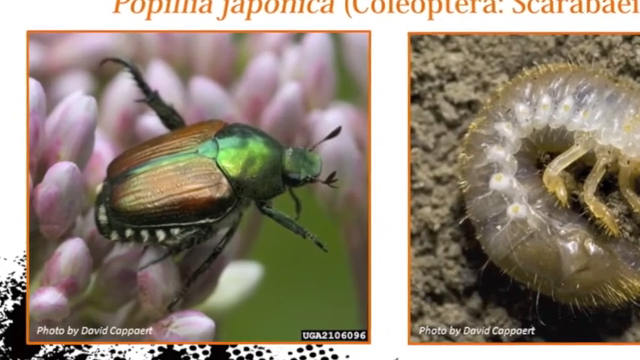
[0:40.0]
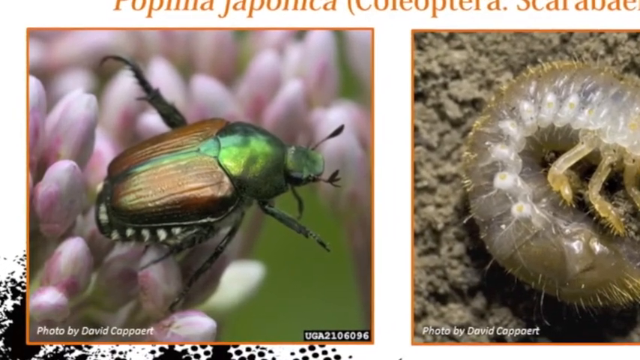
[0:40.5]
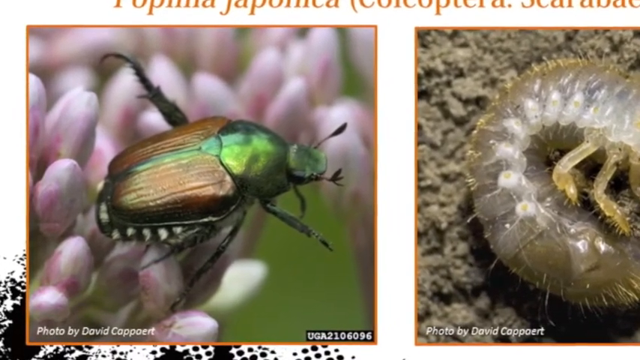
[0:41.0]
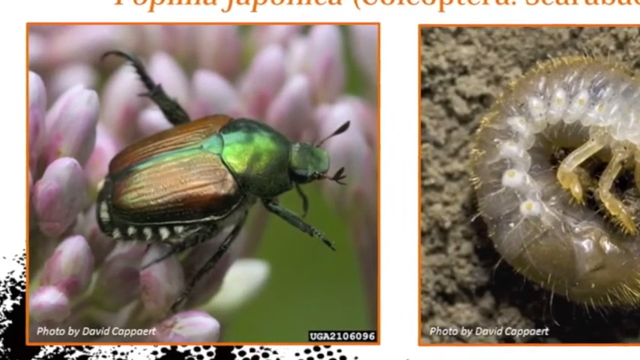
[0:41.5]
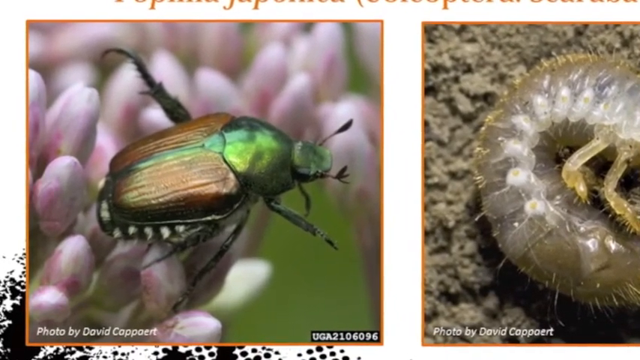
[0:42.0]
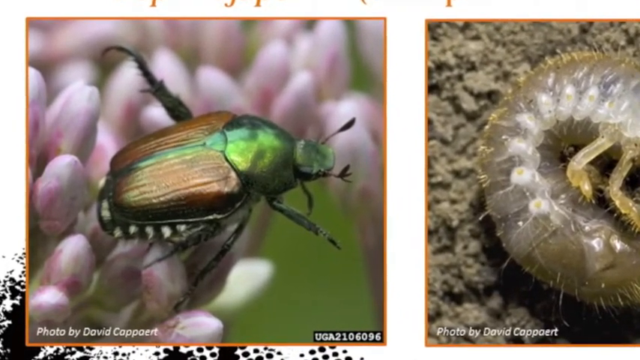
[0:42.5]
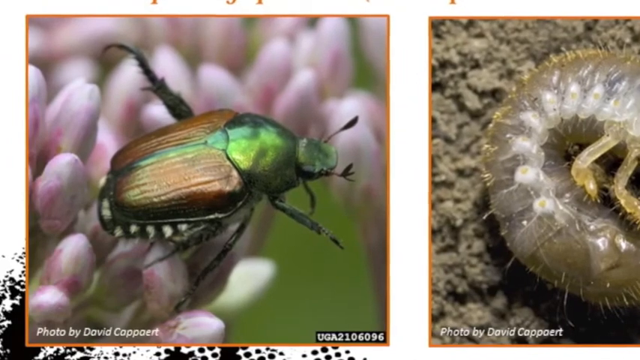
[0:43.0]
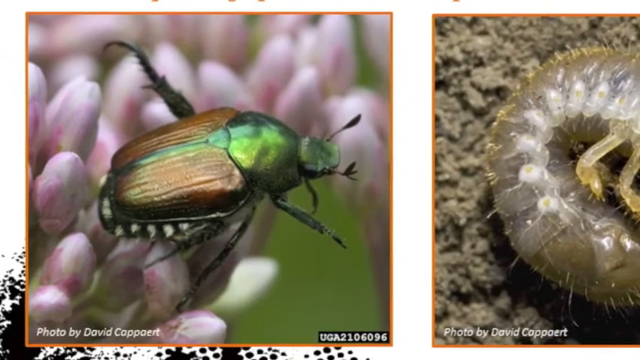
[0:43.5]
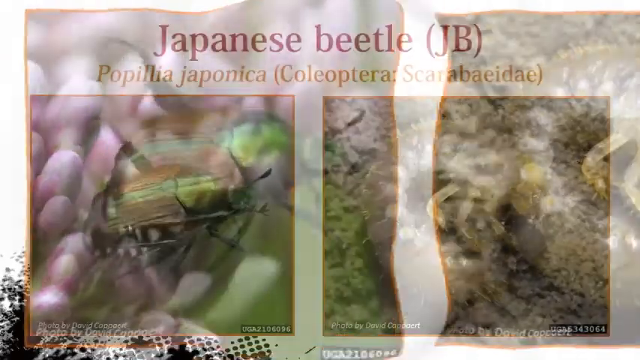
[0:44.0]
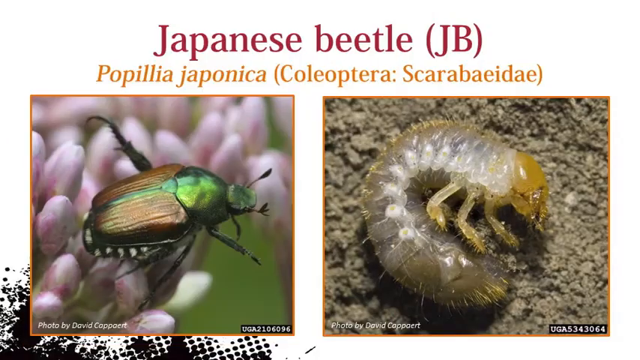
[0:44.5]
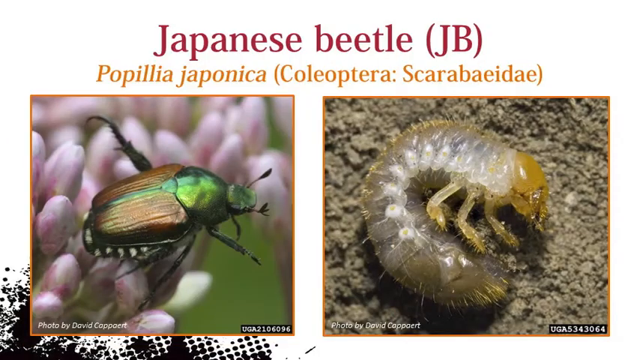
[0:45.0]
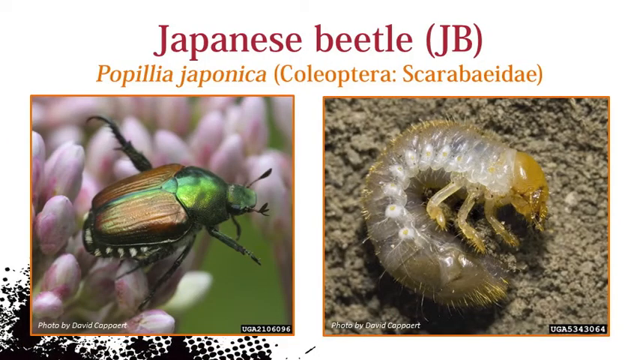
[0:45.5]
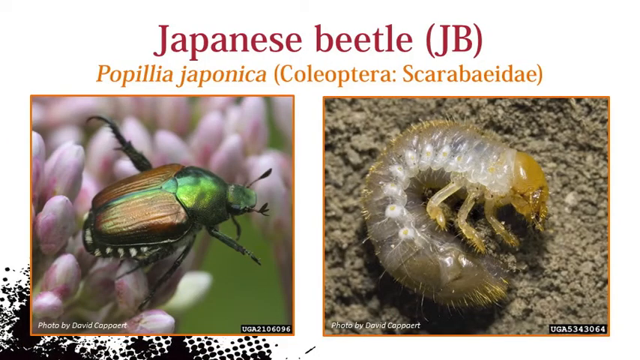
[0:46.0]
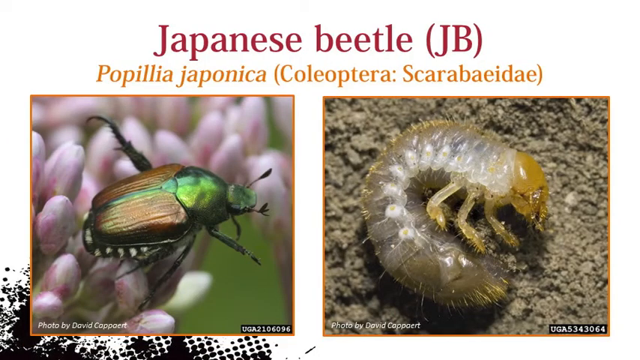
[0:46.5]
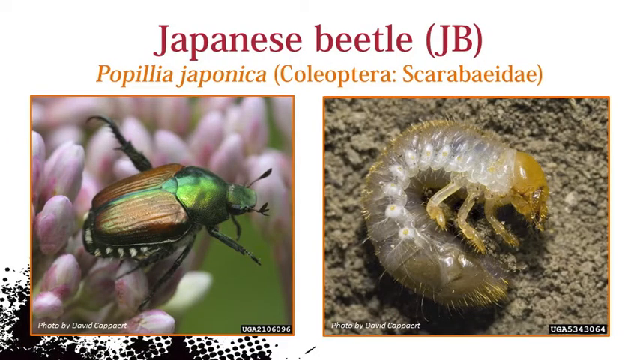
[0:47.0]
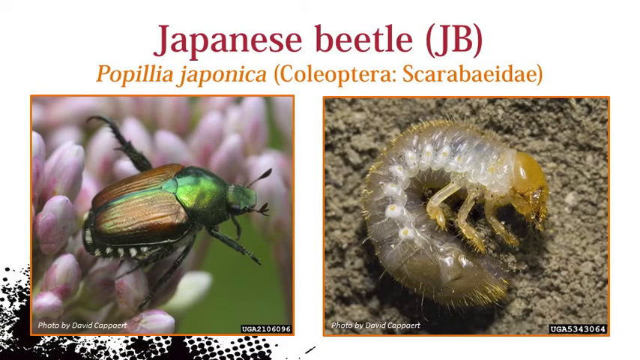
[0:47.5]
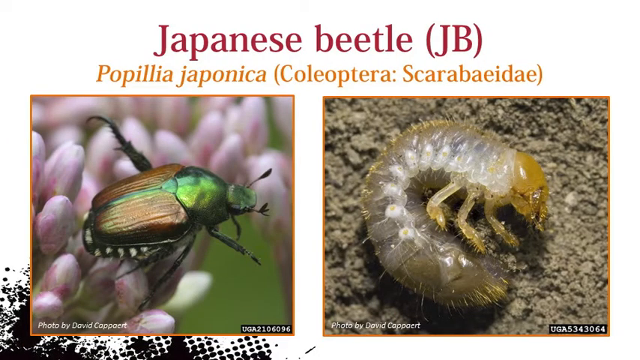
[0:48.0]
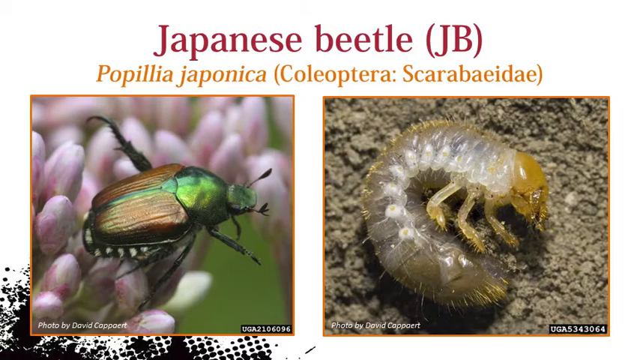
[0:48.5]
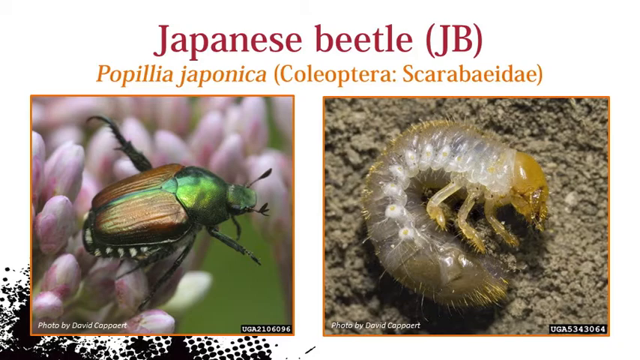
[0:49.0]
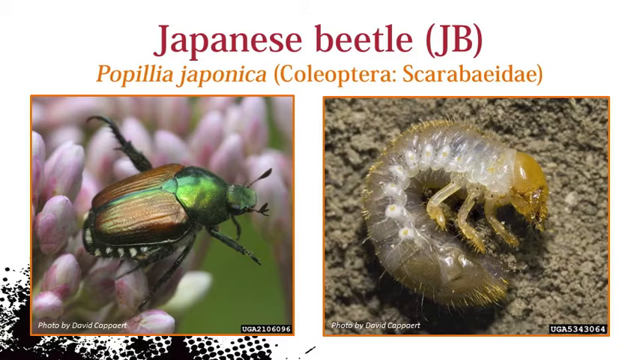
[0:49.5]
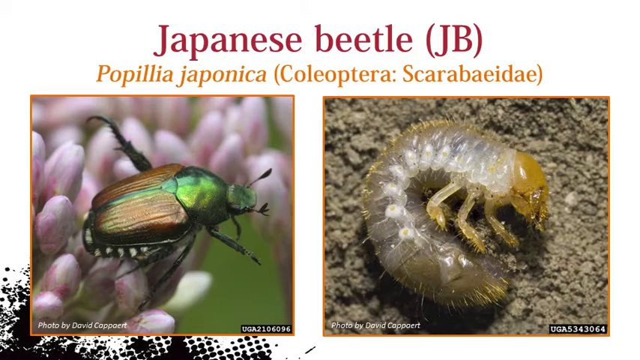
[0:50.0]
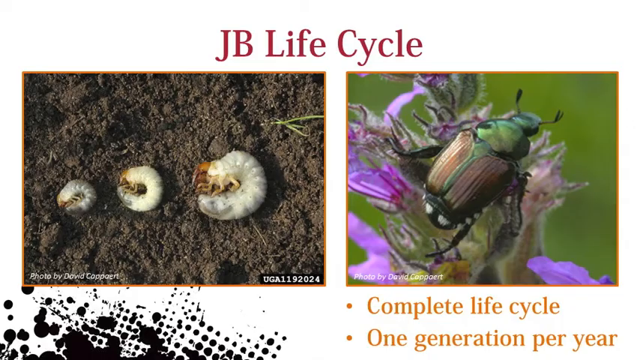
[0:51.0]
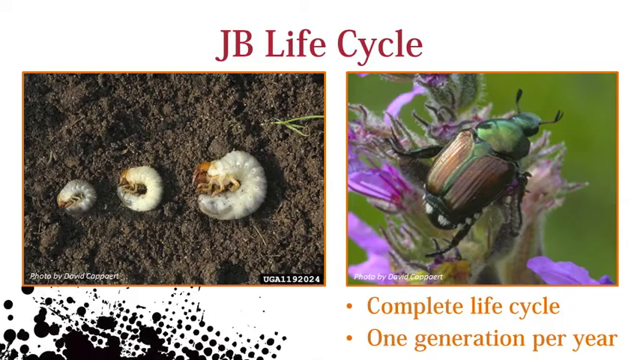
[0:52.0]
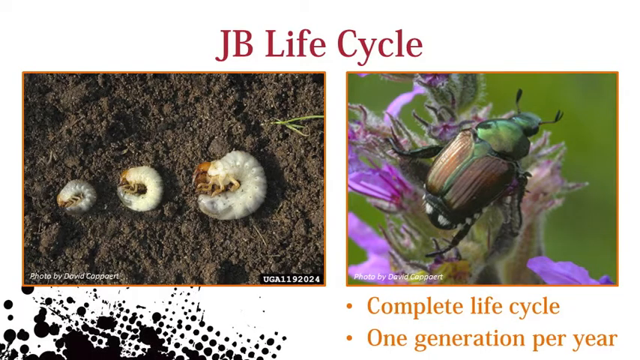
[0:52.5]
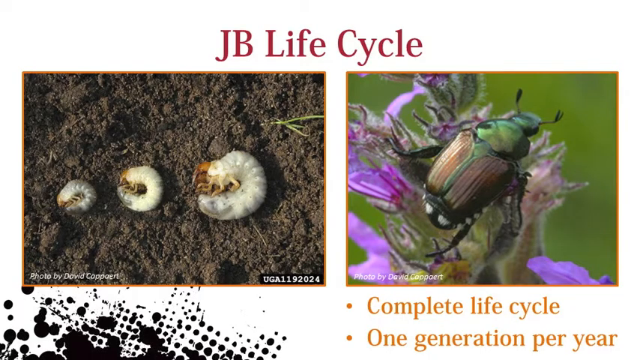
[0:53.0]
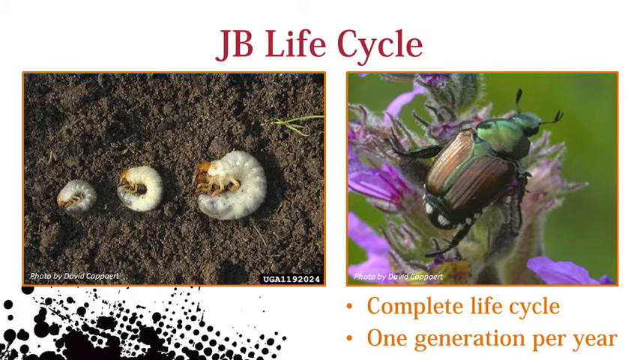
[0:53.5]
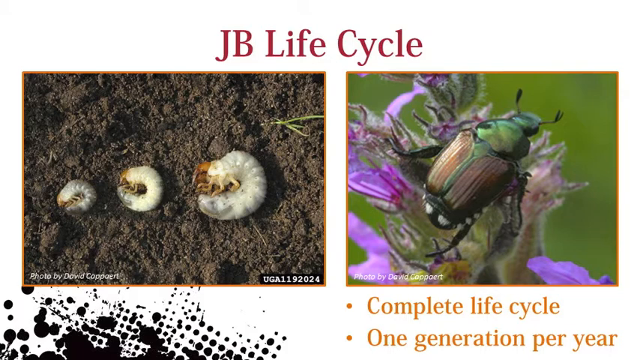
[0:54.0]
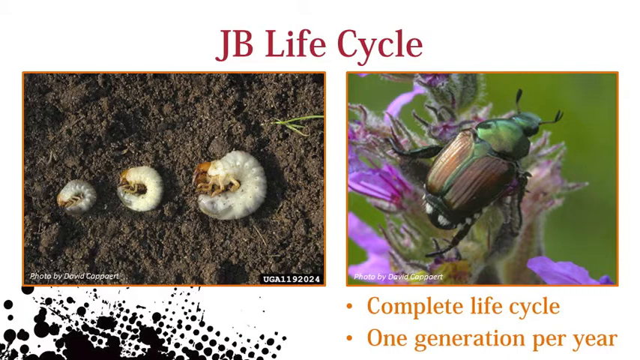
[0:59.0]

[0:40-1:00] The green beetle is shown in the main area of the screen on the left, on top of a leaf or some type of flower. On the right, the curled-up see-through beetle lies on the ground. Credits for who took the photos appear at the bottom left of the images. The video cuts back to the Japanese beetle slide, with its scientific name below the title. It then cuts to another page titled "JB Life Cycle" with two images. One shows the green beetle on top of a flower, and on the left the baby see-through beetle is shown growing from small to medium to large. At the bottom right is the text "complete life cycle, one generation per year." The flowers in the images on the right are pink and purple.